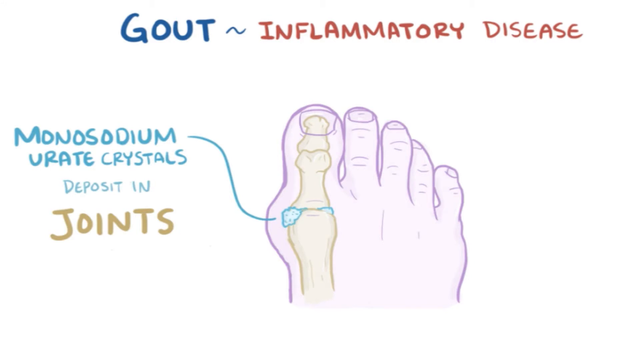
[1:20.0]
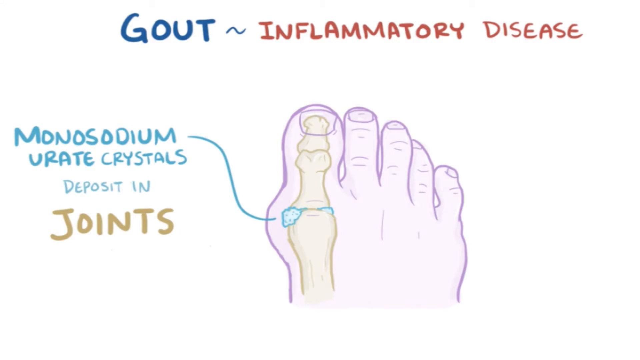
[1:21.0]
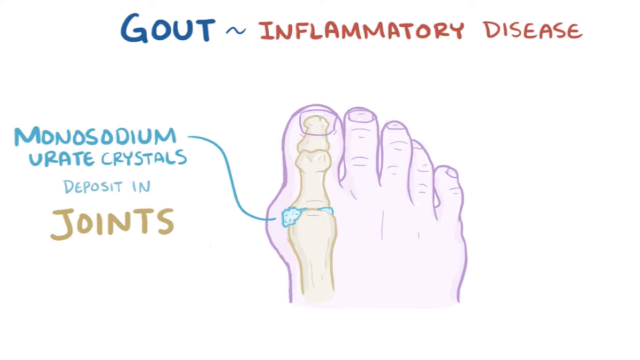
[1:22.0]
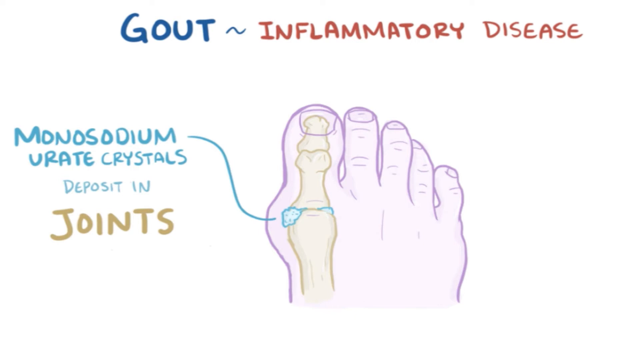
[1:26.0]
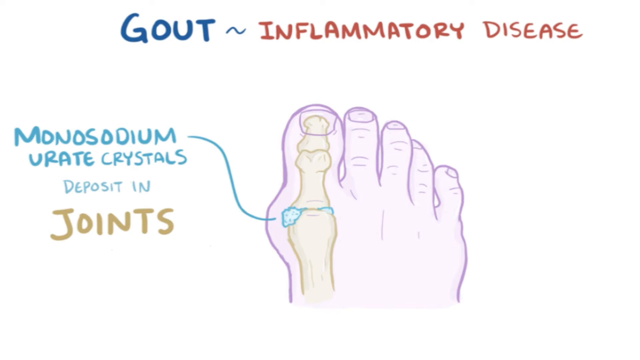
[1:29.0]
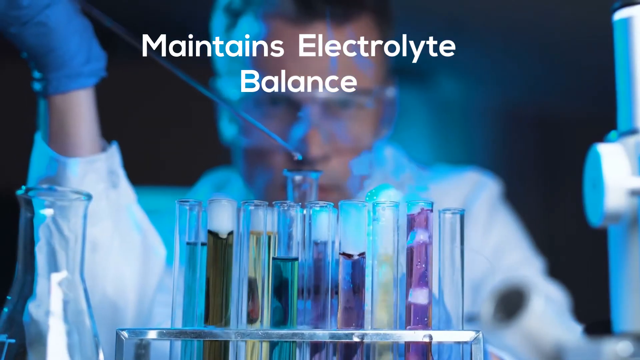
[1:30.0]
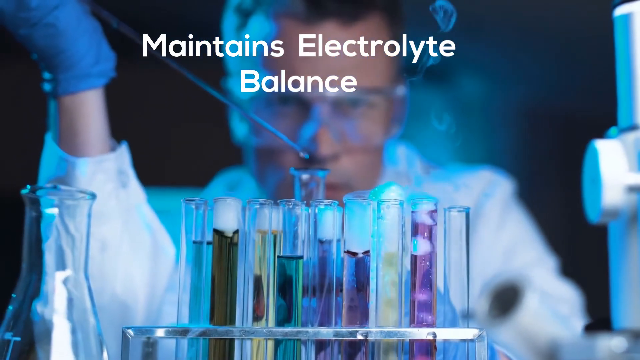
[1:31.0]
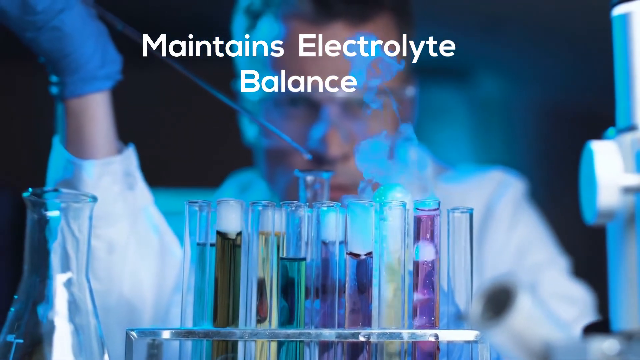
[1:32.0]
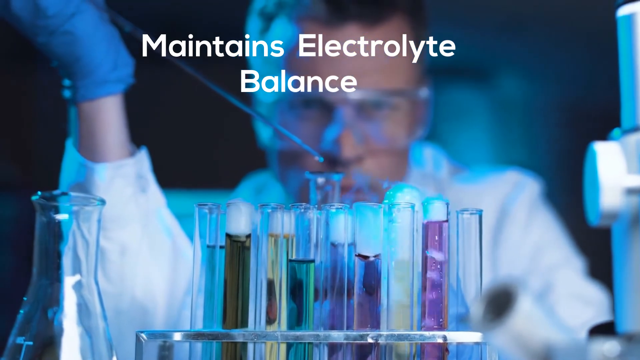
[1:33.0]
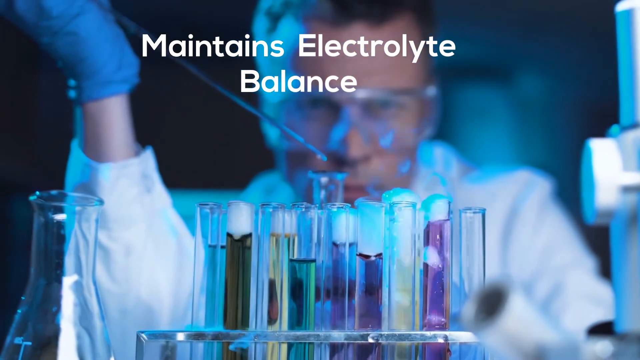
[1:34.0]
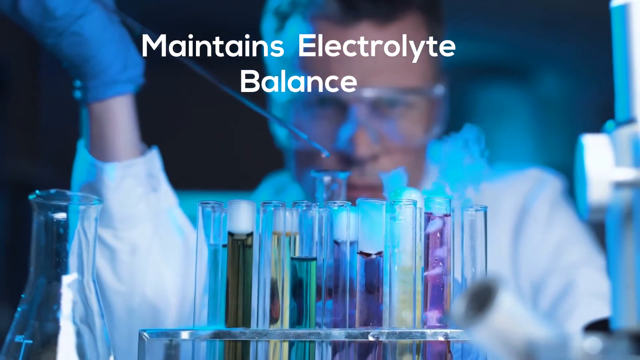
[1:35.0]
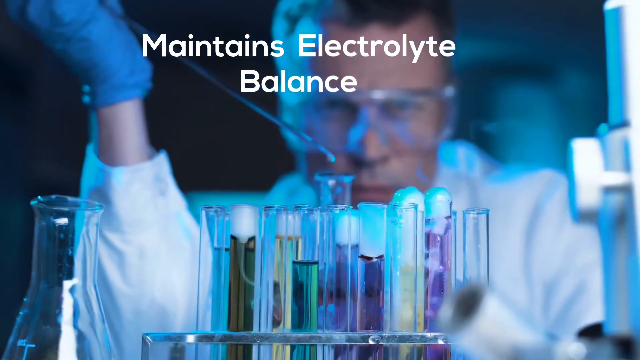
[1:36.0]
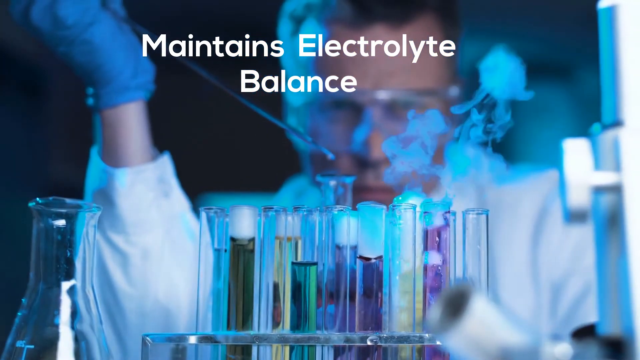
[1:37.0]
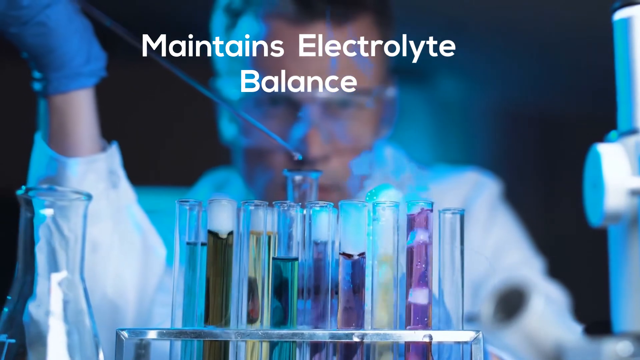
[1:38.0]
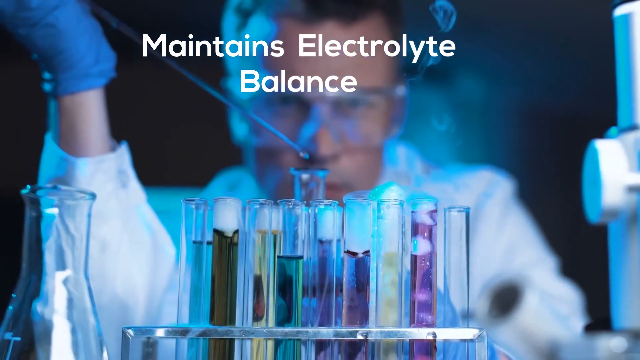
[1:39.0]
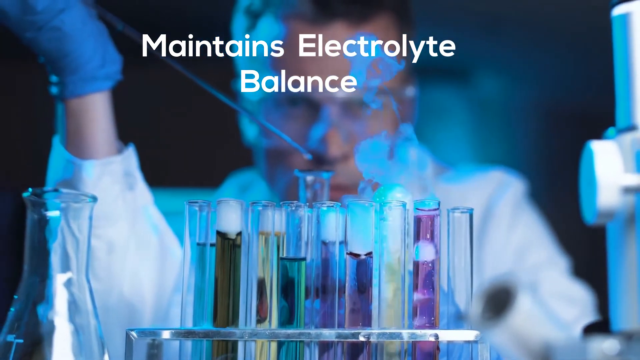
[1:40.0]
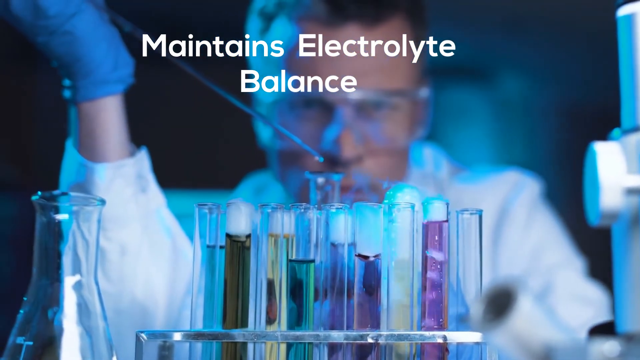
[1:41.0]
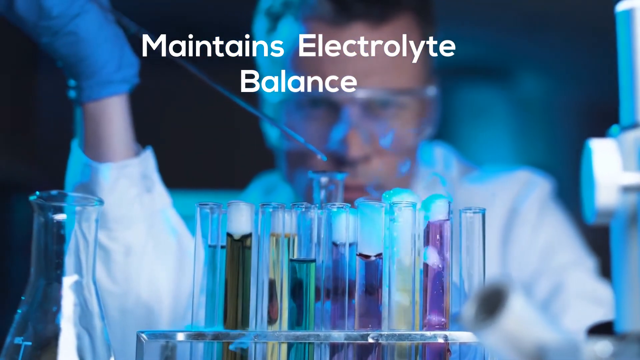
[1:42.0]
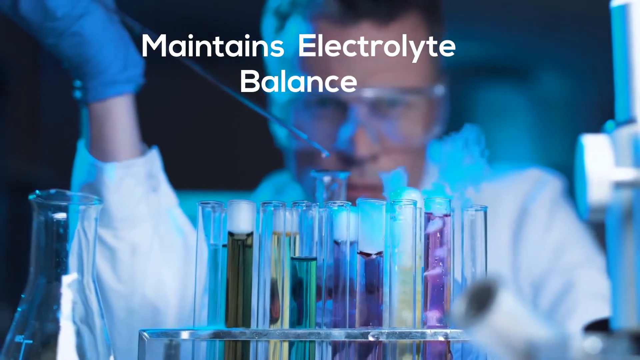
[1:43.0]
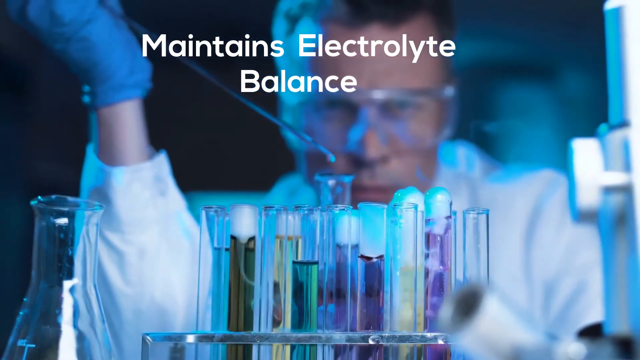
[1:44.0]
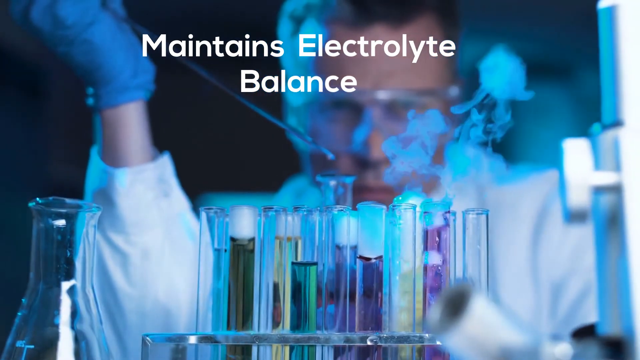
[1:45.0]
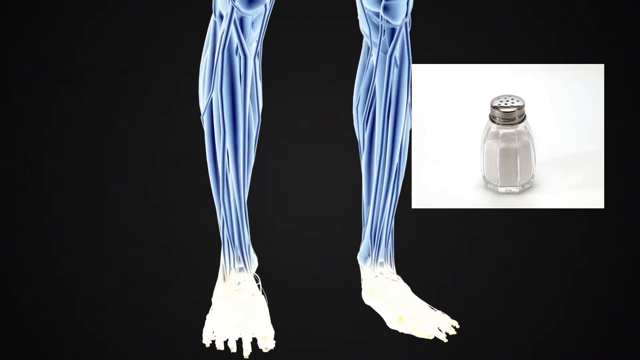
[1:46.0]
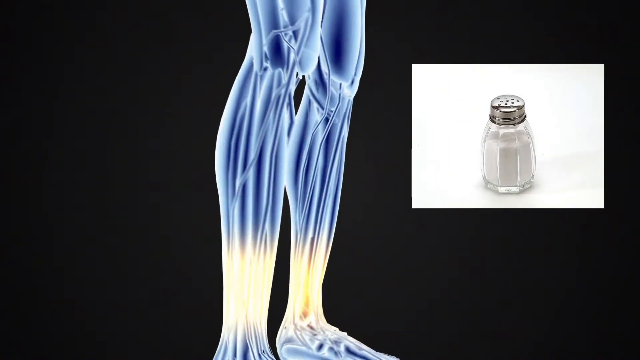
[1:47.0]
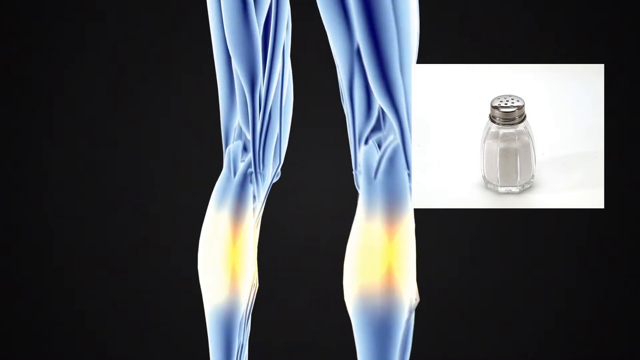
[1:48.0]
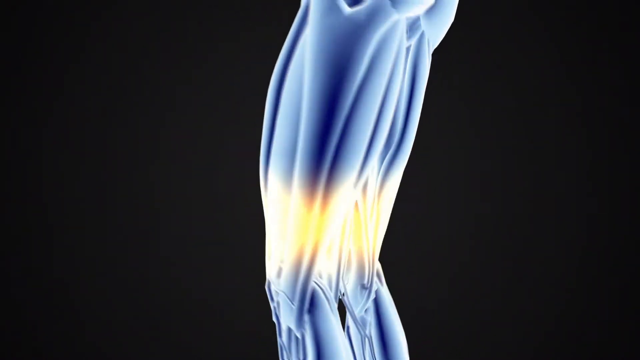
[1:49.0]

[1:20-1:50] A human foot is labelled "gout inflammatory disease" at the top. The big toe of the foot exposes the skeleton, and it is labelled "monosodium urate crystals deposit in joints", with an arrow pointing at the curve of the toe. The video then shows a lab setting with a scientist wearing a white lab coat, goggles and gloves. The scientist has test tubes holding different chemicals of different colours; some of the chemicals are emitting gas and there are some flames. At the top it reads "maintains electrolyte balance". The scientist drops some chemicals into one of the test tubes. Next, a human body is shown with a salt shaker in the corner.